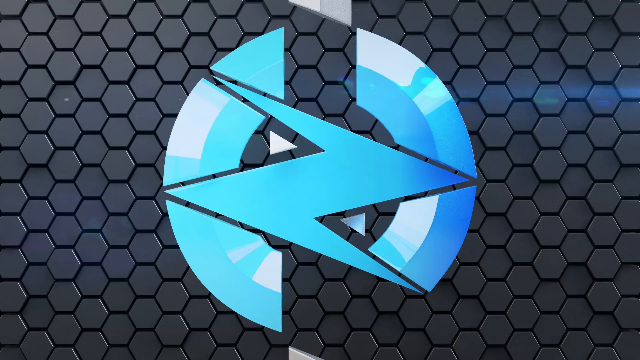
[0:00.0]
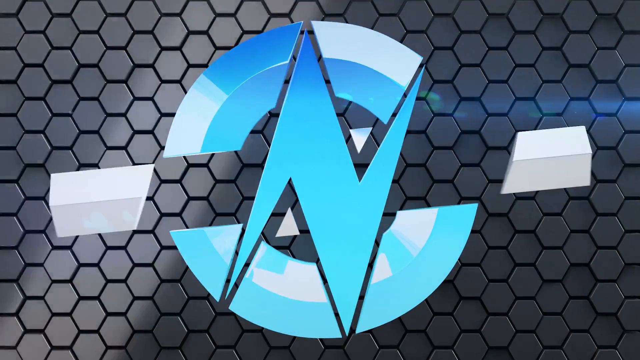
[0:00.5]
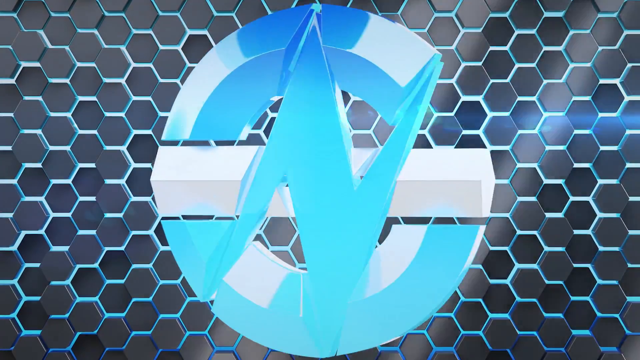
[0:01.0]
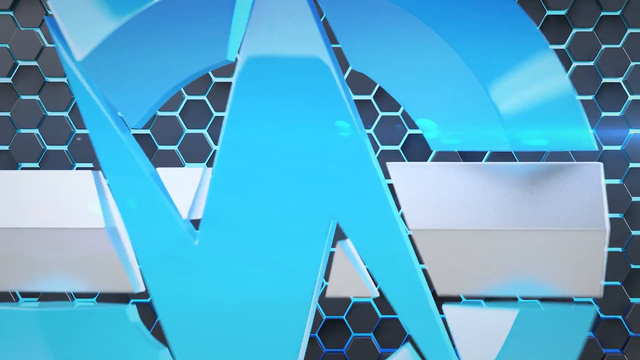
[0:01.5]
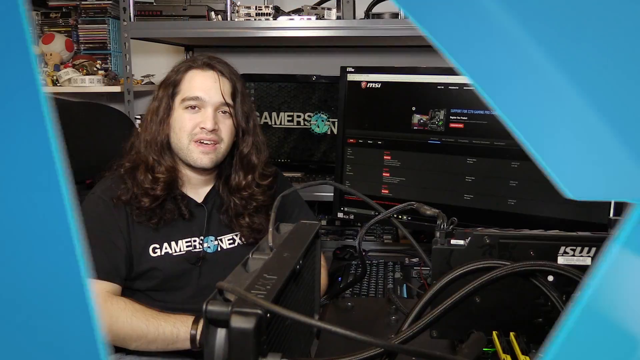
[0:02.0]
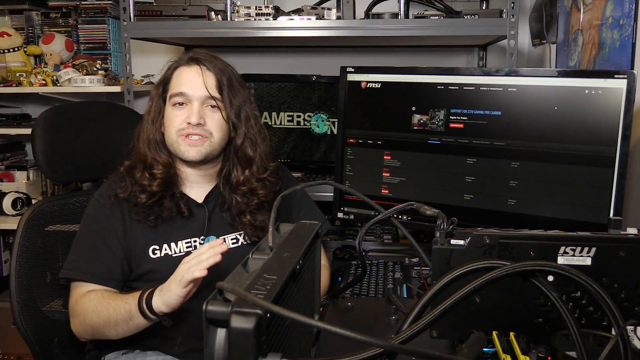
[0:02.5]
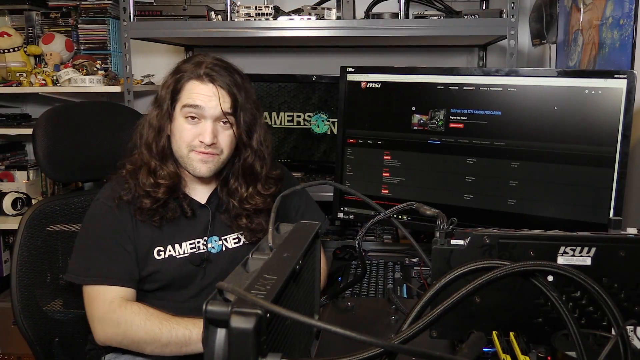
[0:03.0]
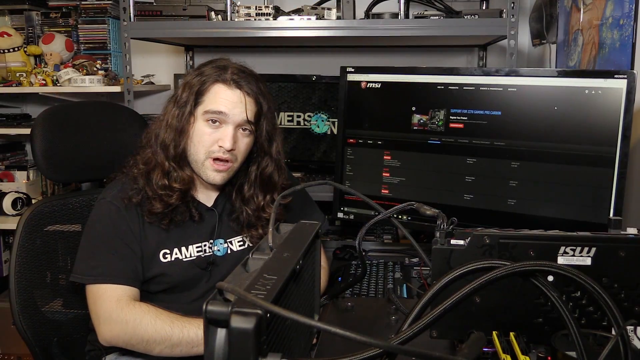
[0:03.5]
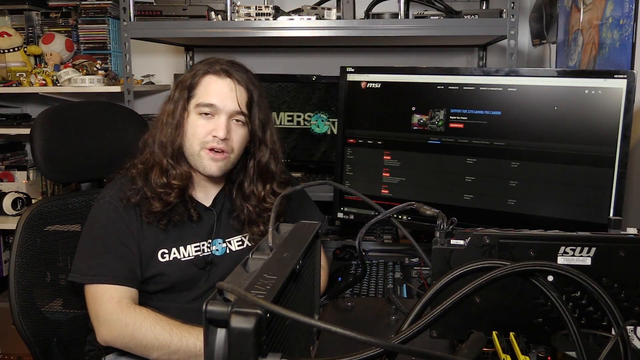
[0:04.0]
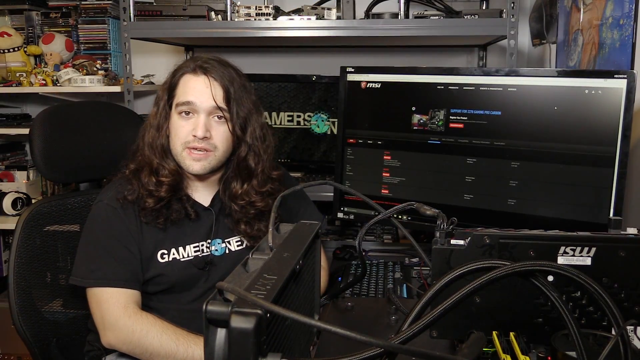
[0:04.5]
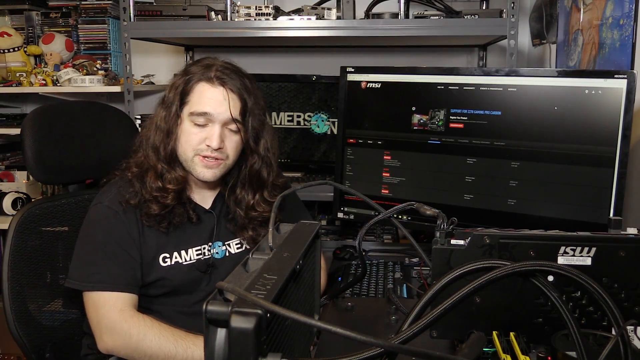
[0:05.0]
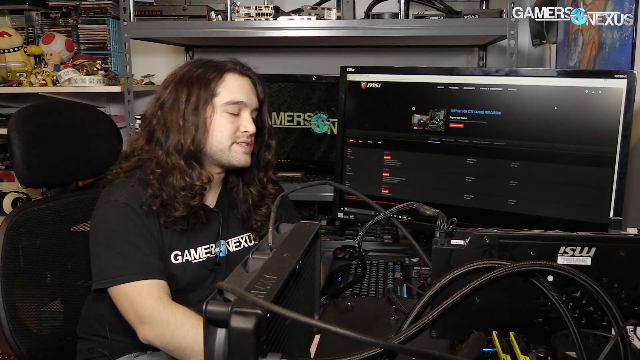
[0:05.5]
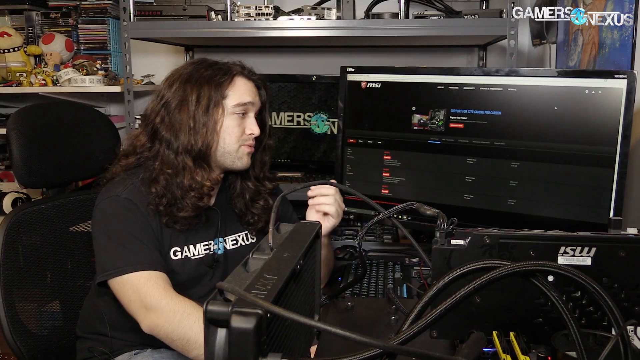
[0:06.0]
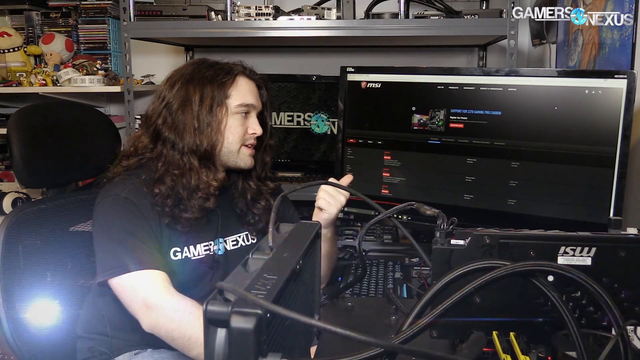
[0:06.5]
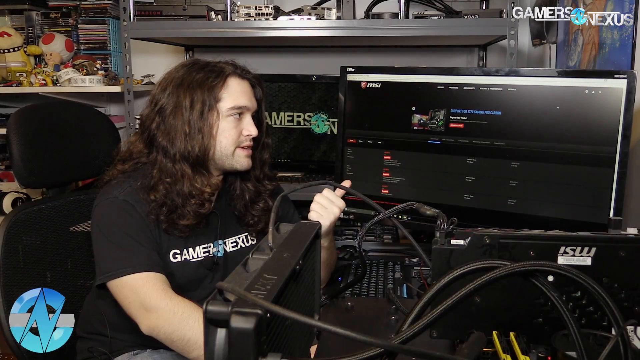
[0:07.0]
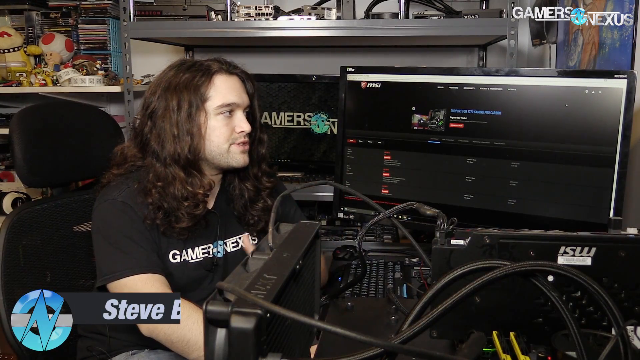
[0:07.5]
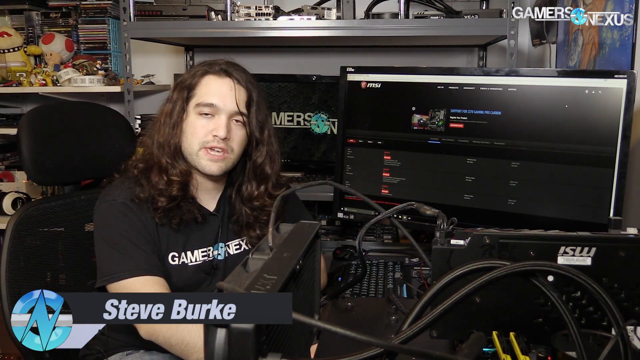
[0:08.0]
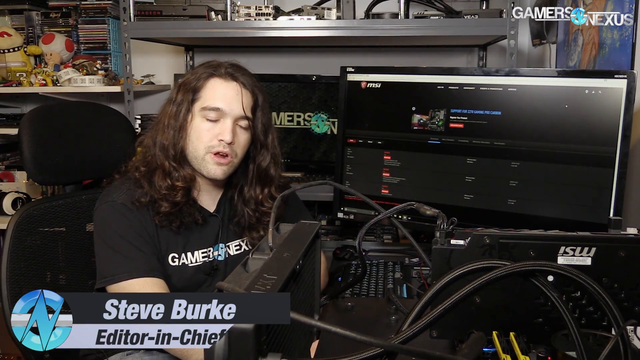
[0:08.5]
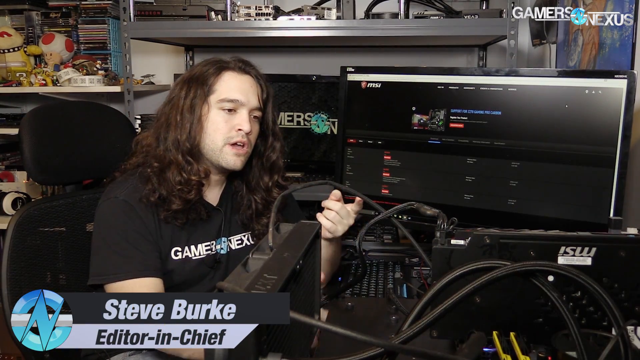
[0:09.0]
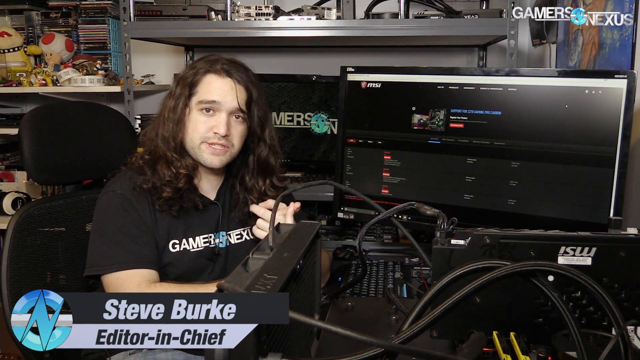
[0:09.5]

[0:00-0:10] A man with long brunette hair is at a setup with a bunch of monitors, wearing what appears to be a Gamers Nexus shirt, and talks to the camera. There is a lot of stuff in the room. Gamers Nexus is apparently the name of the company or YouTube channel, and the man is identified as Steve Burke, apparently the editor in chief. A blue symbol with an N on it appears, apparently the company logo.